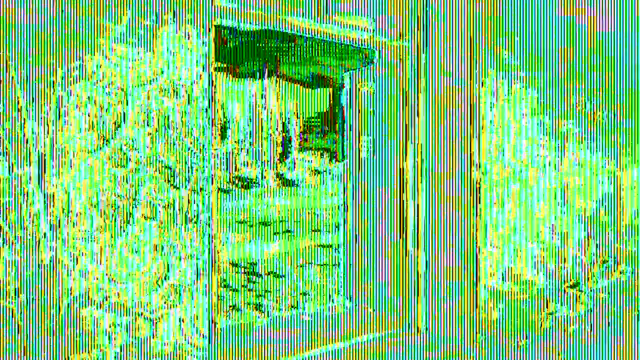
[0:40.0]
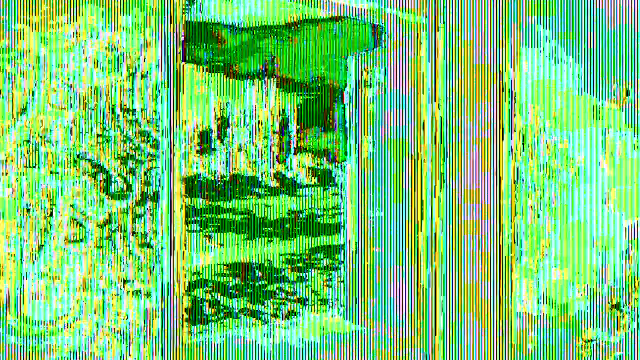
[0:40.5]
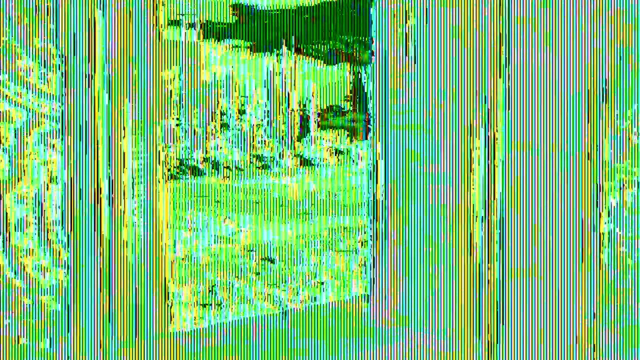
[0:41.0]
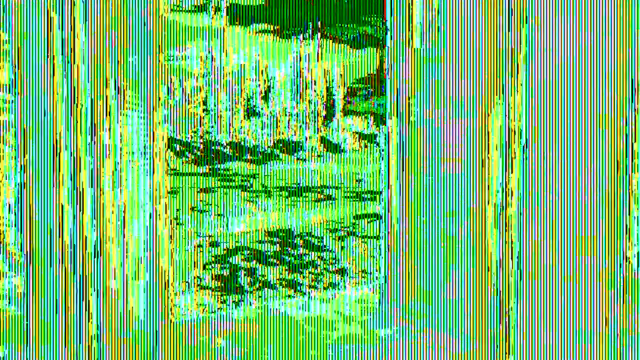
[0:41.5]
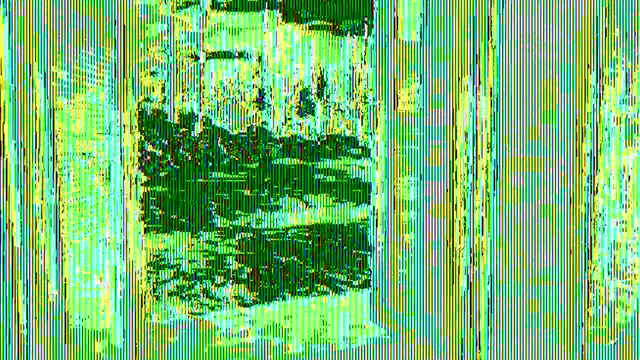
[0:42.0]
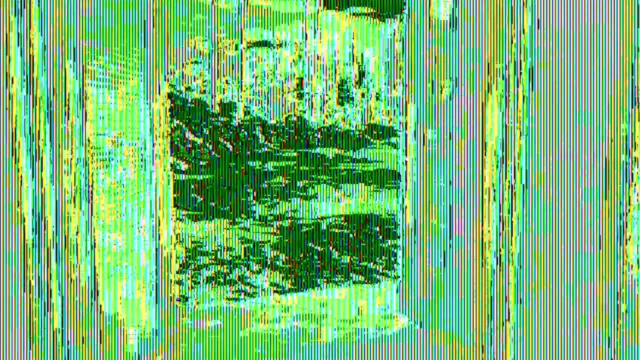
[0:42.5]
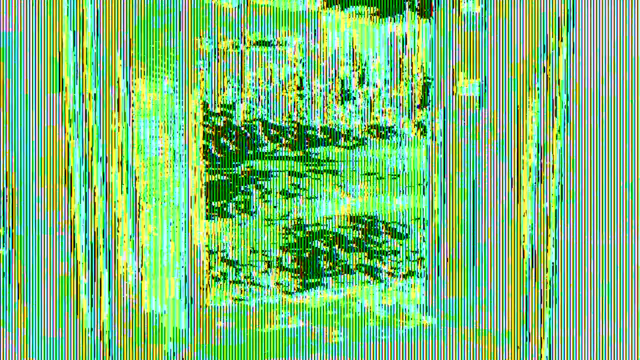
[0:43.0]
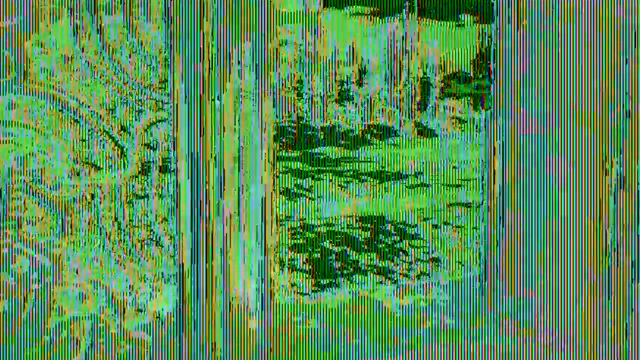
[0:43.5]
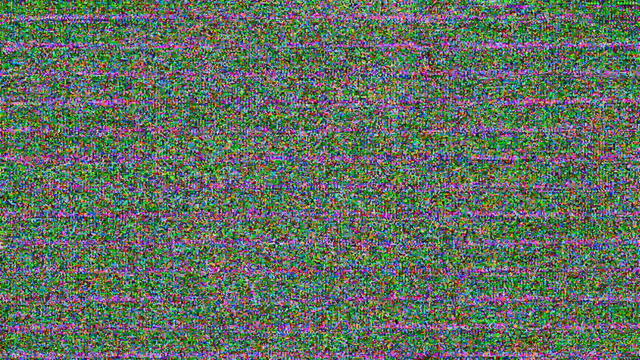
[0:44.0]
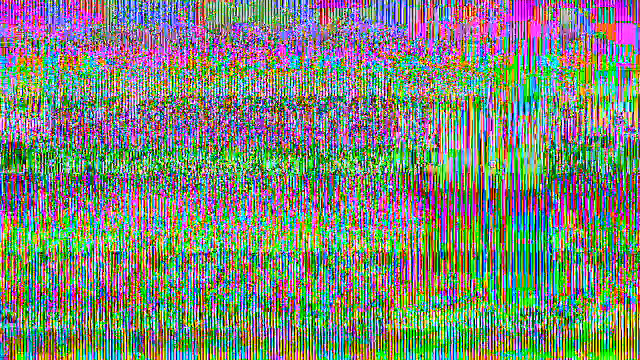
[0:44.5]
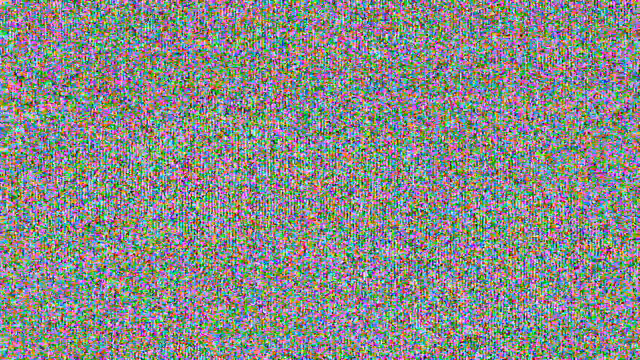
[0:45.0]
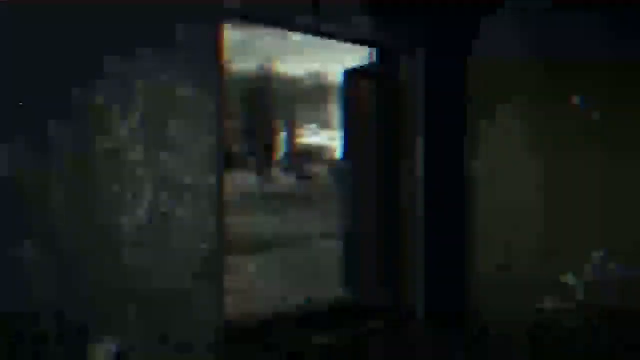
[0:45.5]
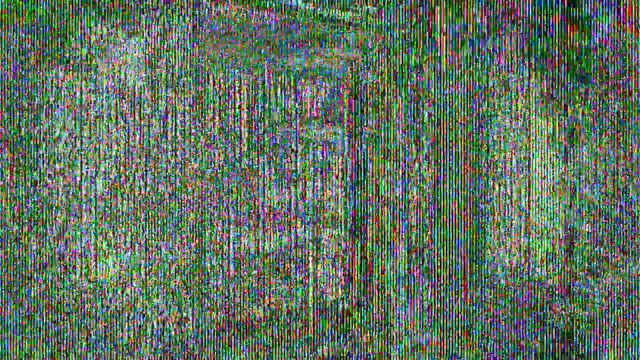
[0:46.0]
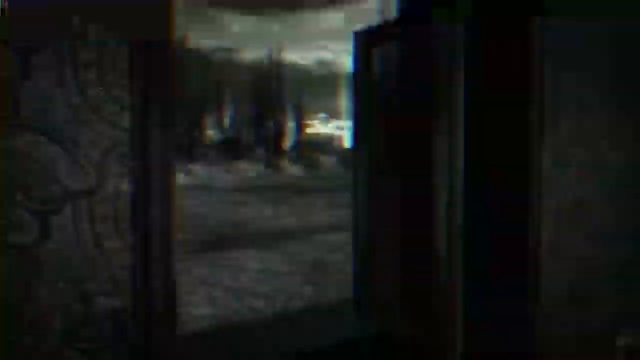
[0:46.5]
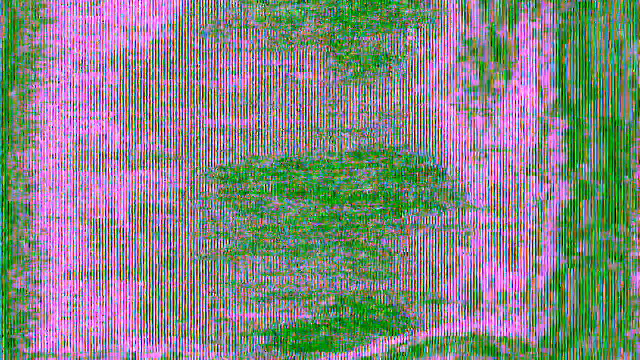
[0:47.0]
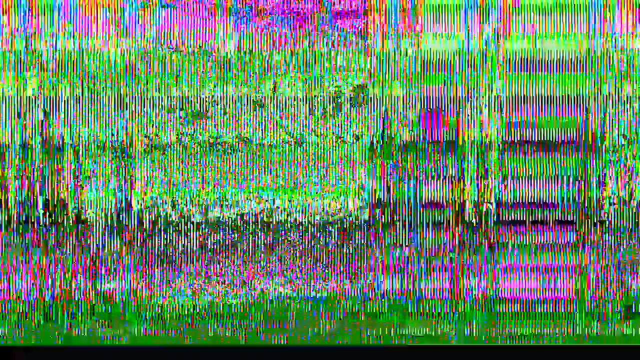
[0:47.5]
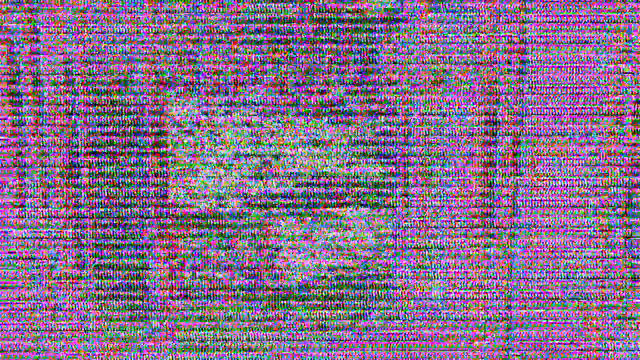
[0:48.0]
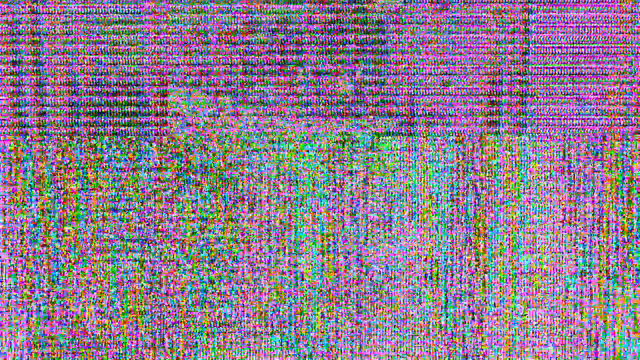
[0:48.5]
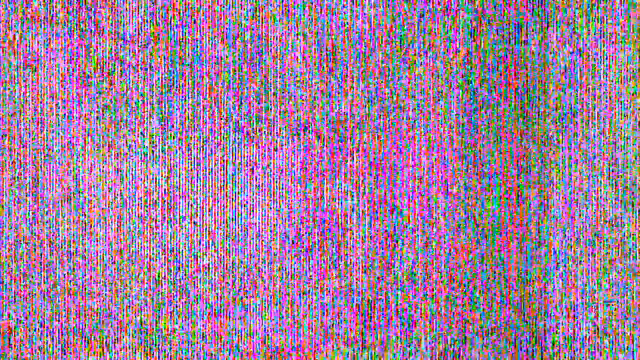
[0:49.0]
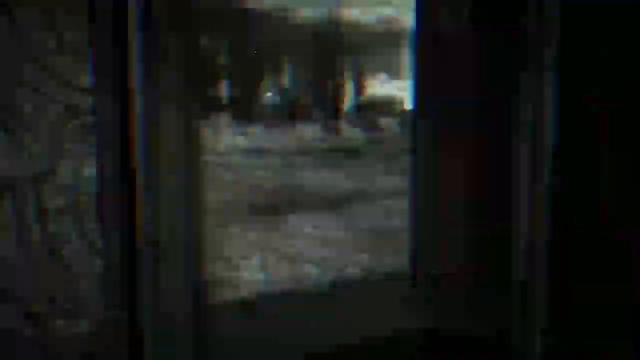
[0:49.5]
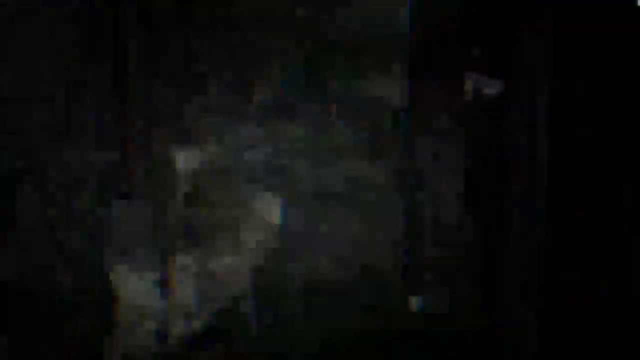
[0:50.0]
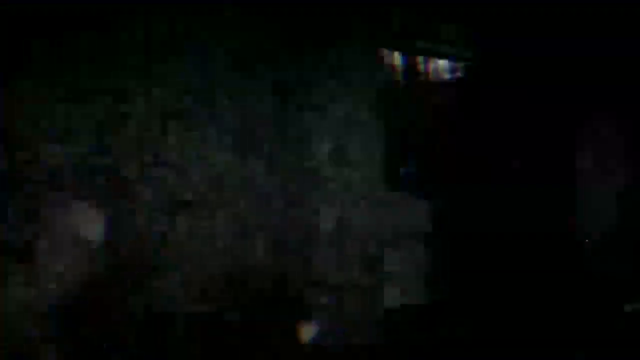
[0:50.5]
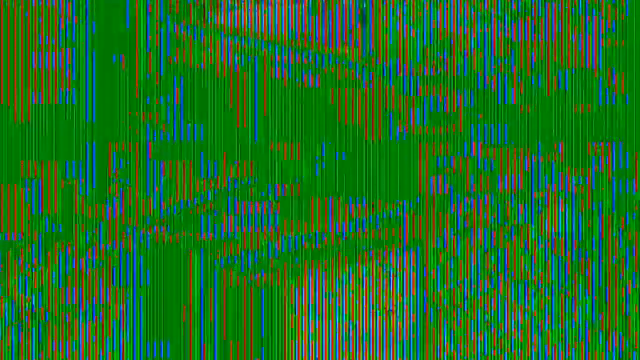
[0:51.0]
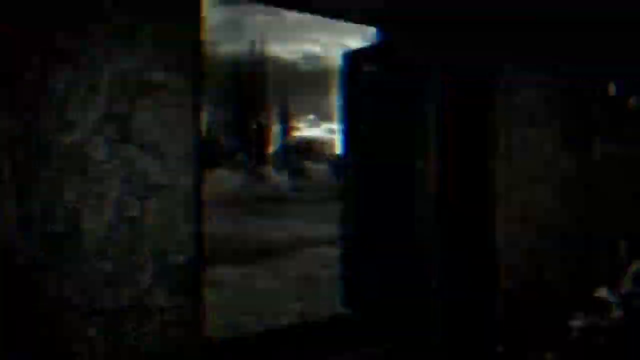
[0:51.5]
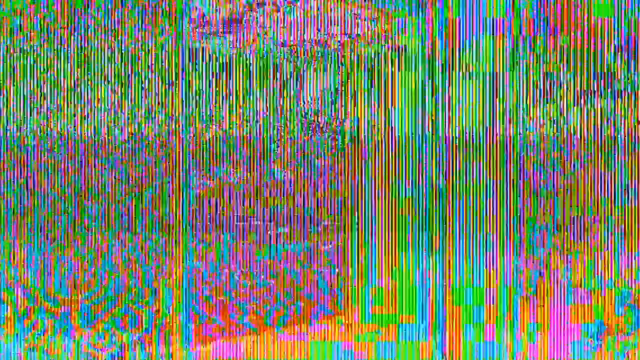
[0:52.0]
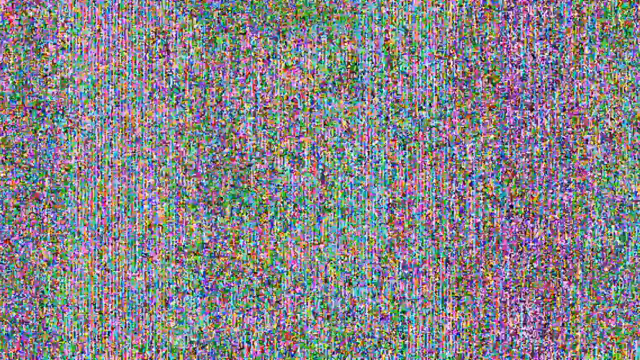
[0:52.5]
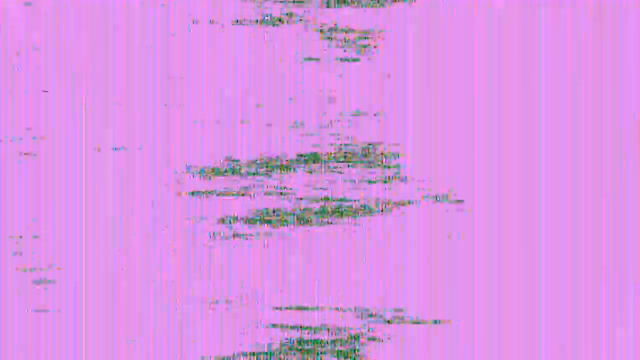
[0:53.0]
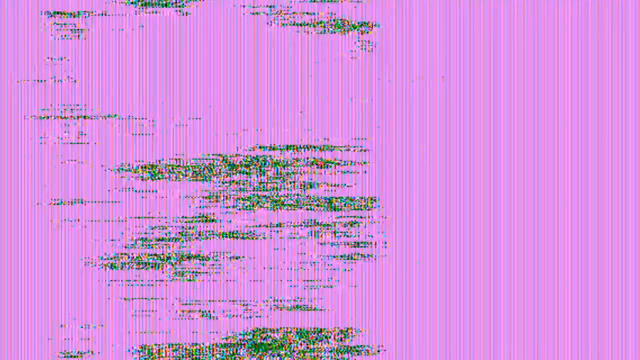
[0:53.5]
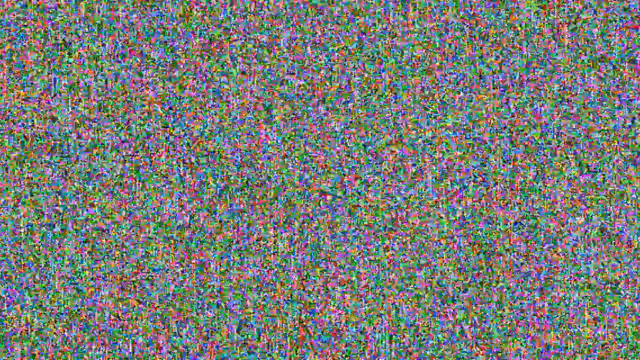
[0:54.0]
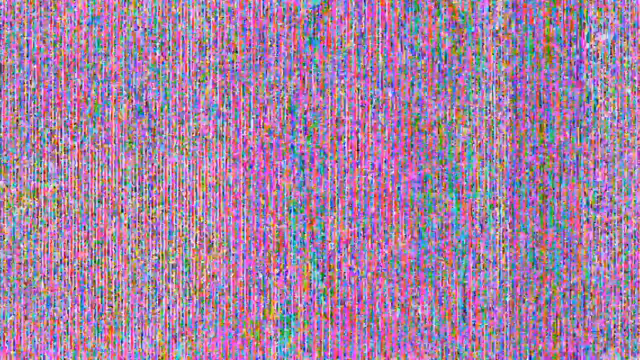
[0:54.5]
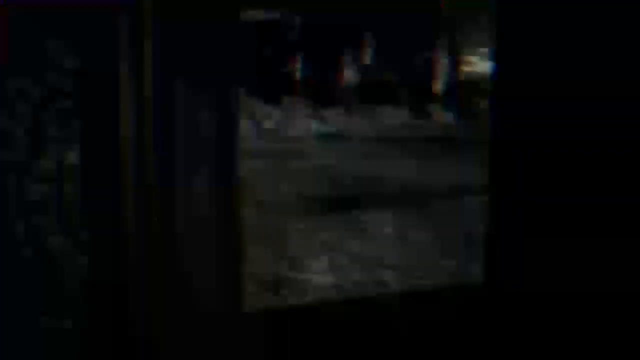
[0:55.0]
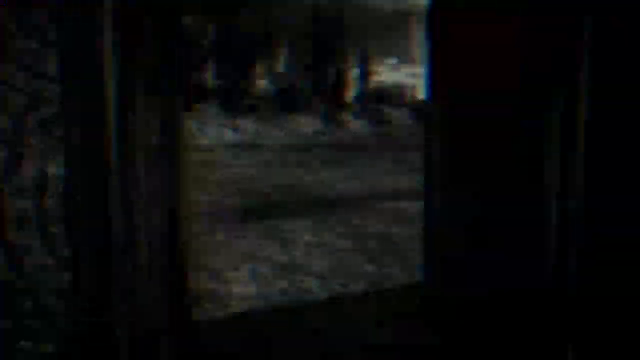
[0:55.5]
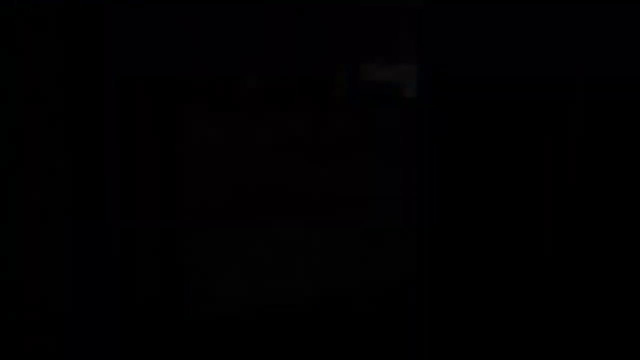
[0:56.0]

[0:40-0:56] A point-of-view shot shows somebody looking out of a window; the person is not seen, and the perspective is that of the person looking out. The shot begins entirely in static, with the outlines of the view visible, and the image keeps flicking between pure static where nothing can be seen, static where outlines can be made out, and the actual footage. Even when the footage is visible, it is in either black and white or some sort of sepia and is of terrible quality, so it is hard to work out what is going on. The view out of the window looks like it shows the sky and possibly some trees or a building and some grass and plants. The colours have been almost reversed, so the clouds in the sky are very dark against a light background.